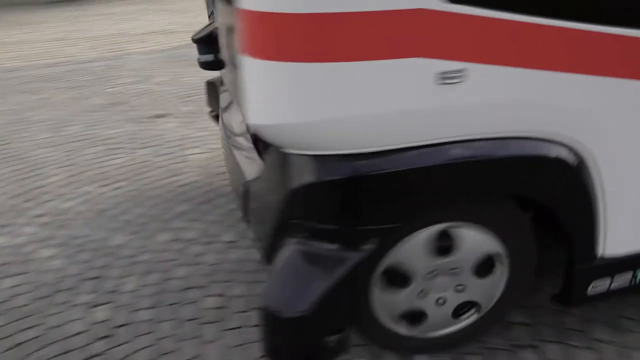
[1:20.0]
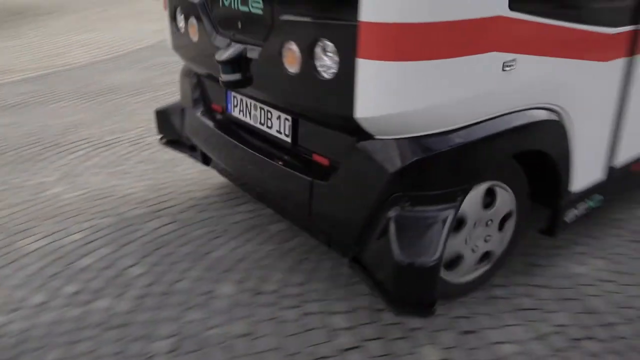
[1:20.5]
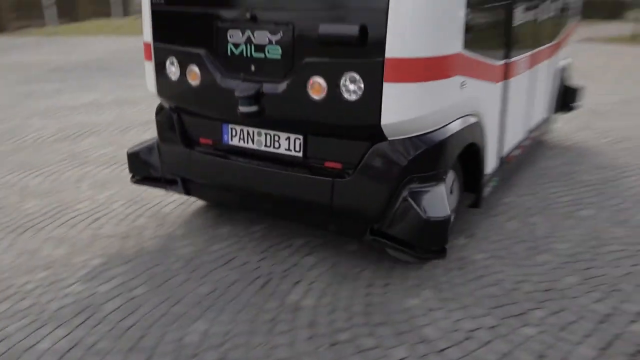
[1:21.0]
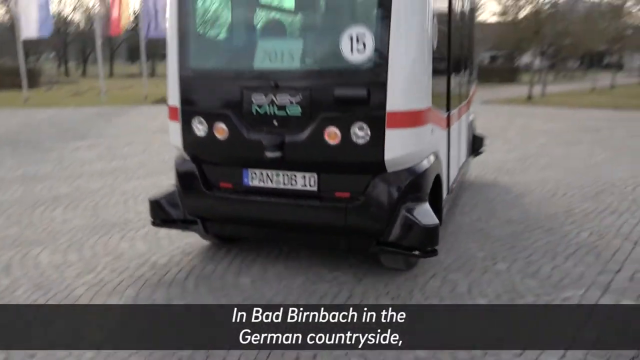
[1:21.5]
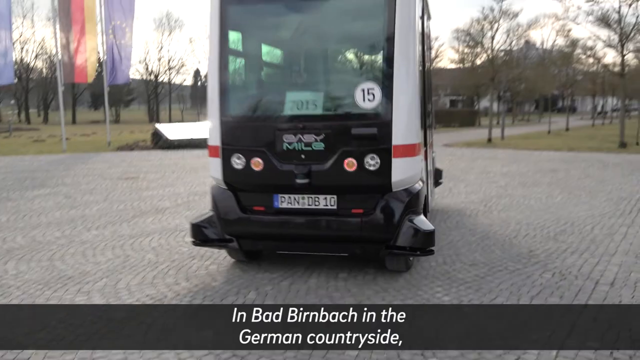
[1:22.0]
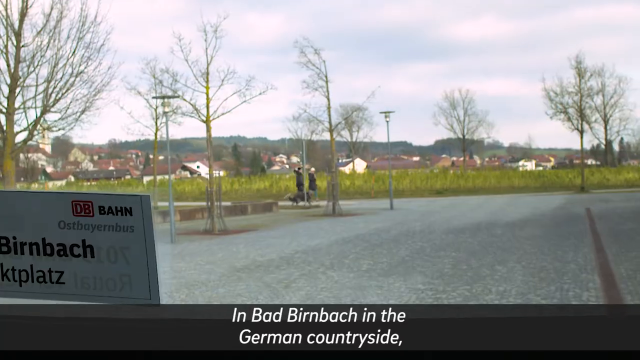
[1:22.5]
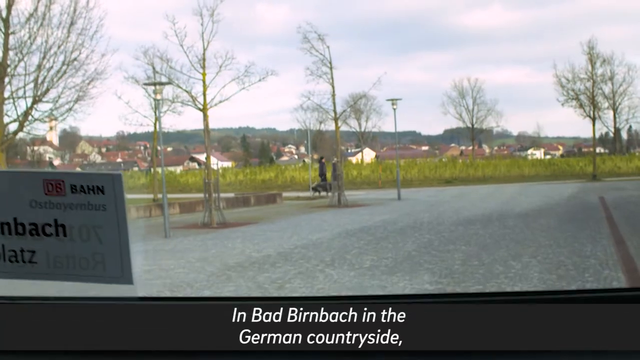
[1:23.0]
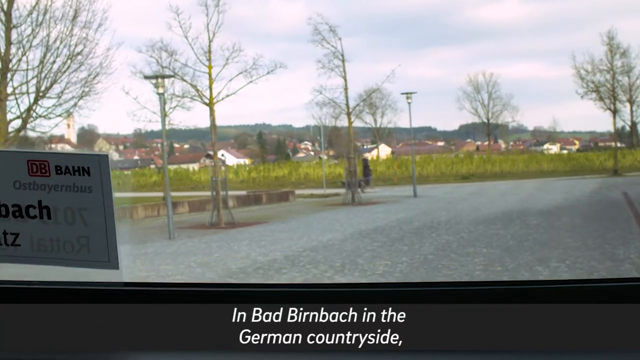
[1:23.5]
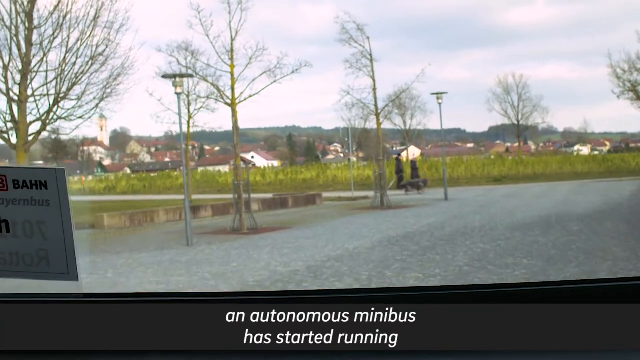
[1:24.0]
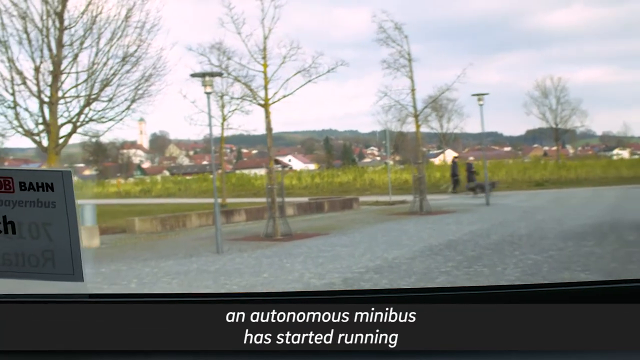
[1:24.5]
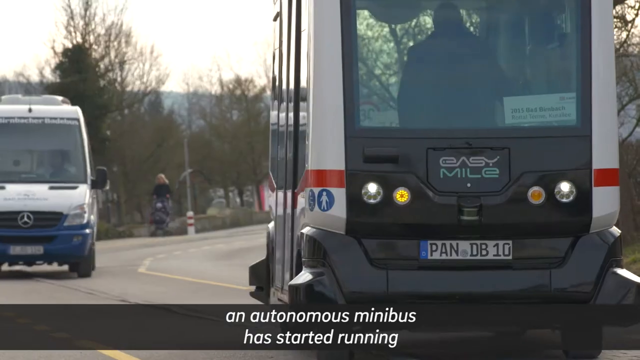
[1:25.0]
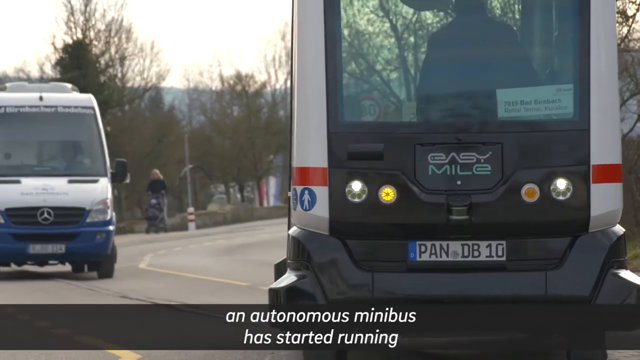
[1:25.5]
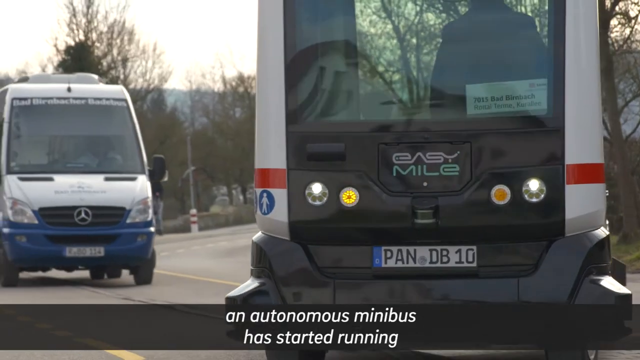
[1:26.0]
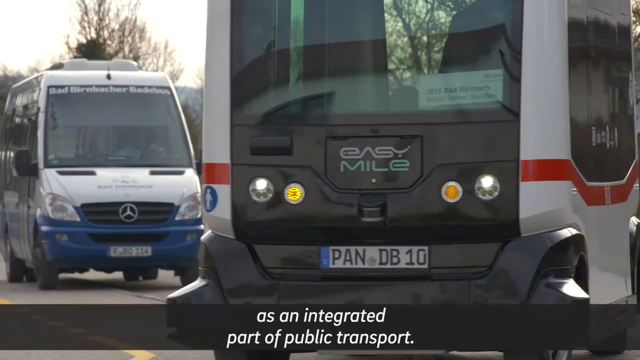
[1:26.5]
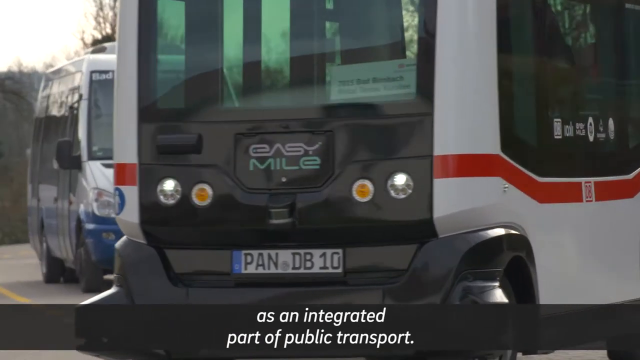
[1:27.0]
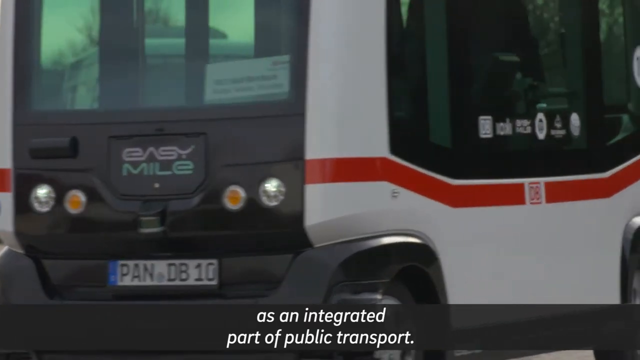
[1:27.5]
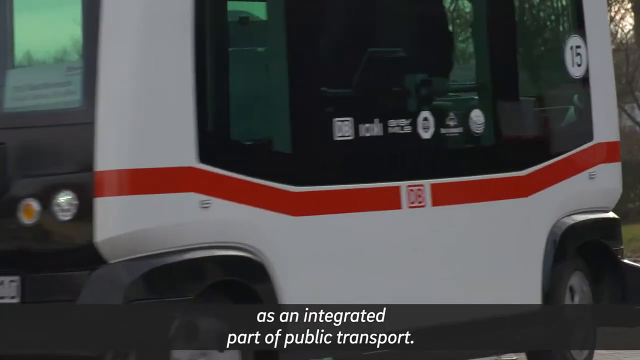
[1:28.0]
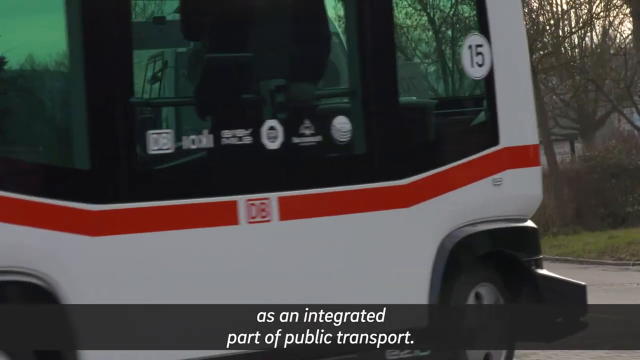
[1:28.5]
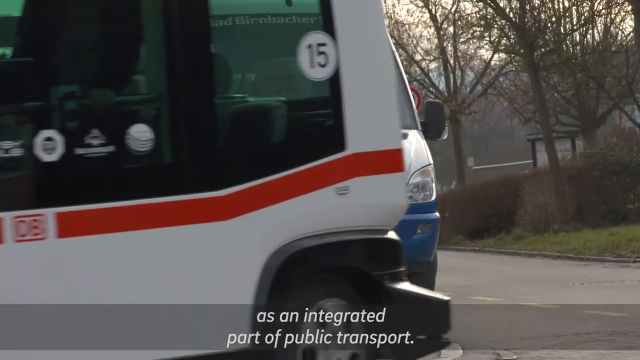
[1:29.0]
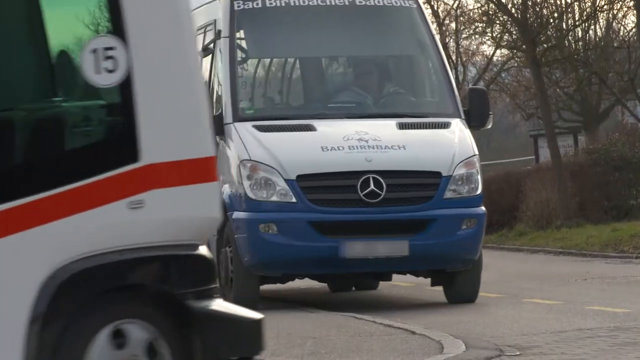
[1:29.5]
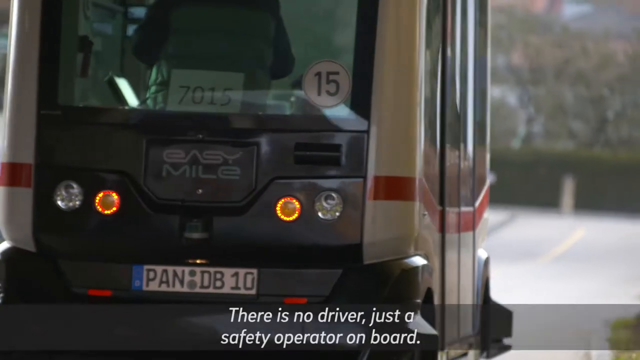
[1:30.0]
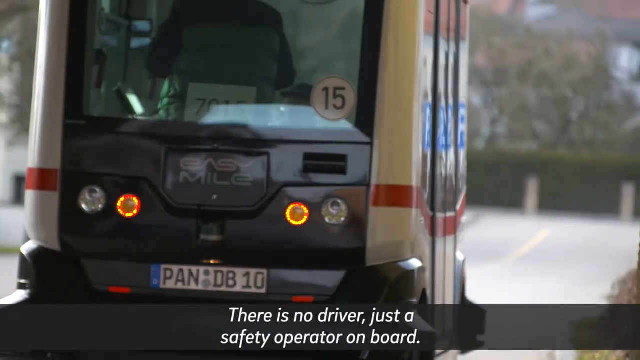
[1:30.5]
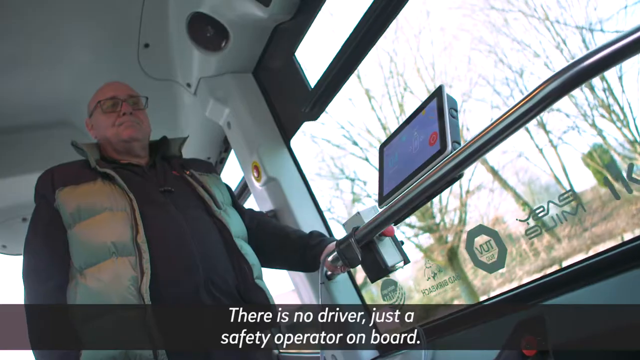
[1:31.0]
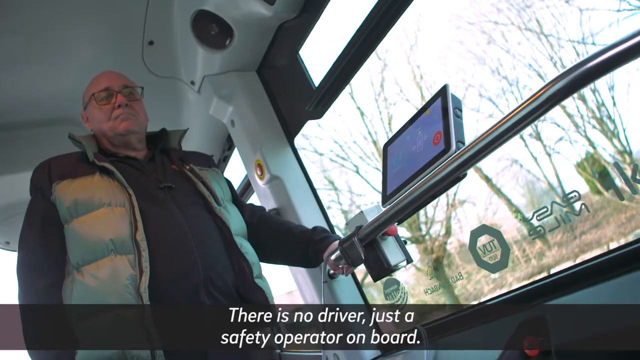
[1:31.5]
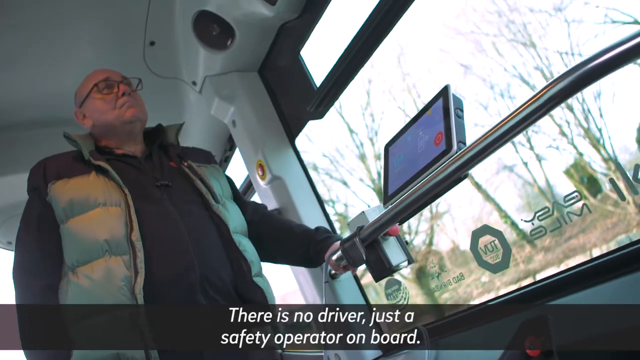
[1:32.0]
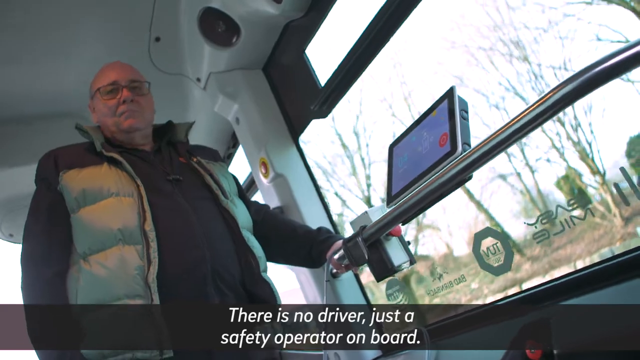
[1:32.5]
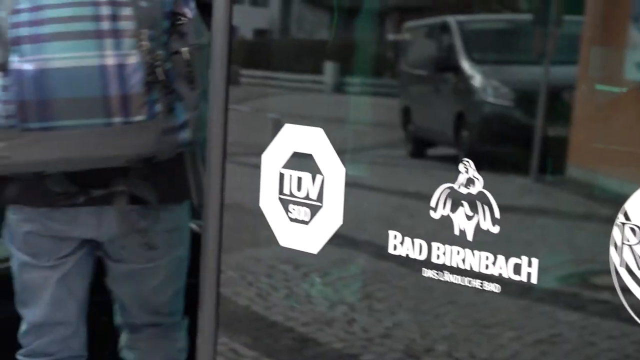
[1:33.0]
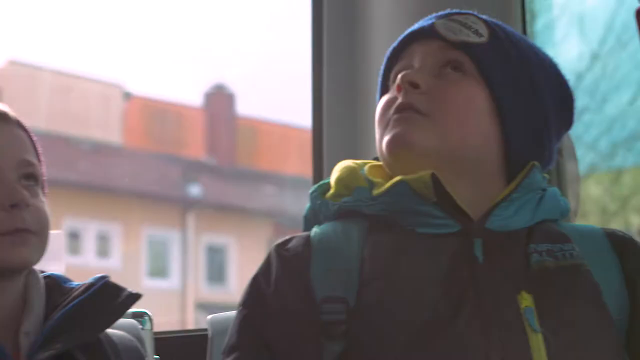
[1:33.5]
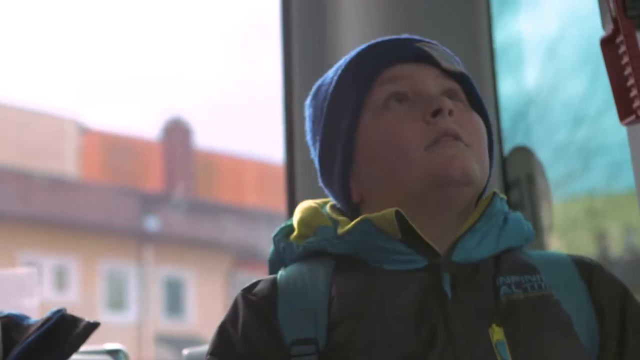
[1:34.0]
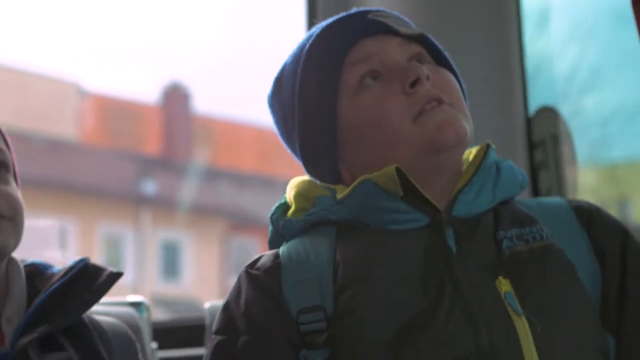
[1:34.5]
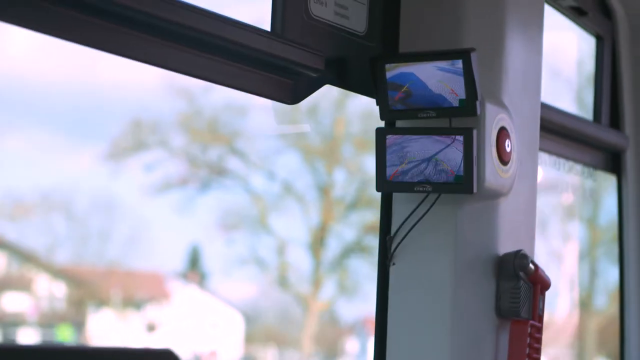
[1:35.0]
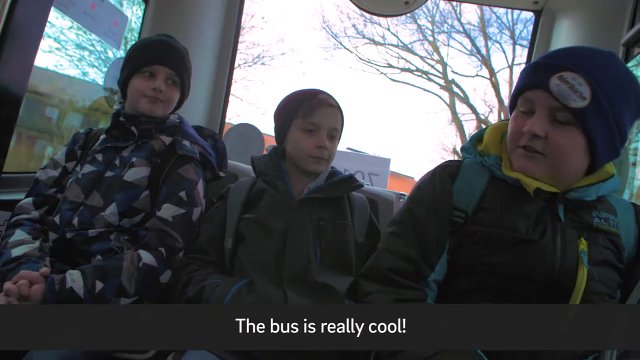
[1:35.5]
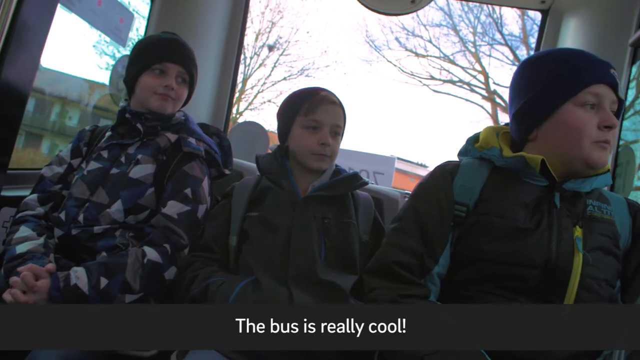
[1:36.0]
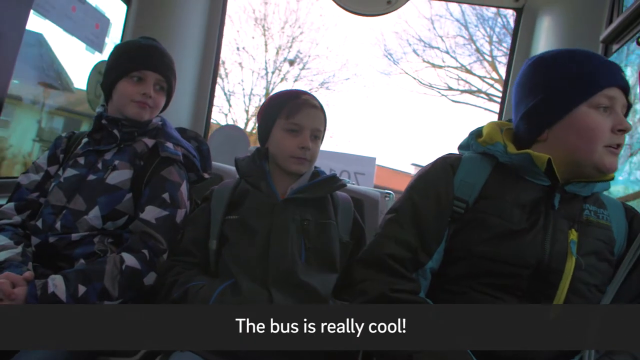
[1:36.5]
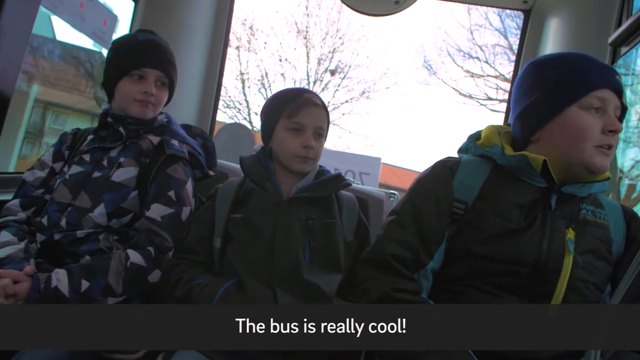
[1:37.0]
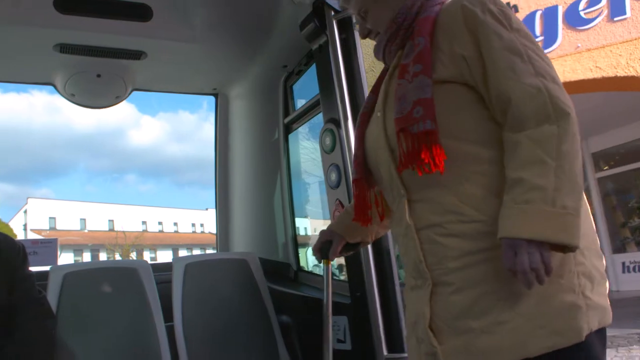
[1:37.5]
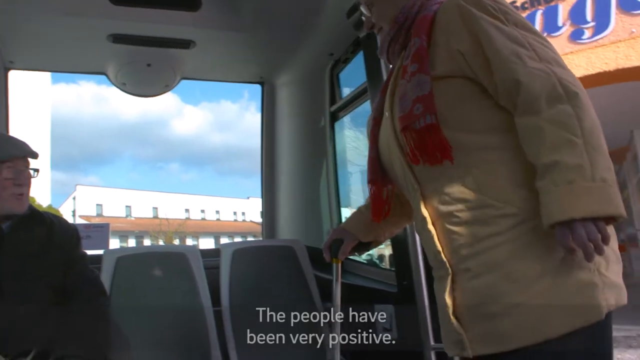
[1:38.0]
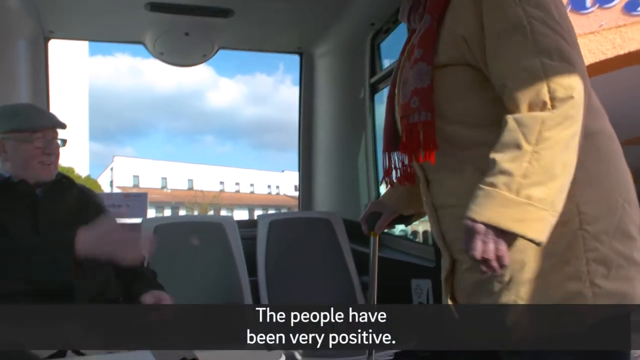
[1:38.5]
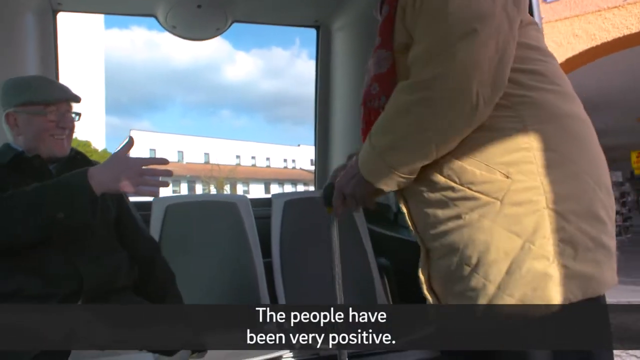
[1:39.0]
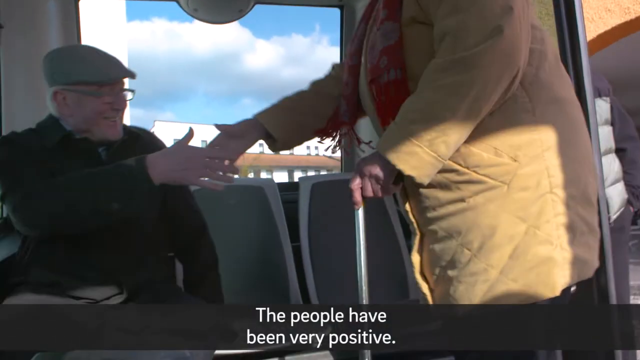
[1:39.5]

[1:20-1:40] The right side and back of a bus are shown; it is white with what looks like a red stripe. The back tire is big and black with what looks like a silver hub cap in the middle. The license plate reads "PAN" and, on the right, "DB" followed by some spaces and "10," in black. Above that, on the back of the bus, "easy" is written in white and "mile" in green. The bus drives along, and the number 15 appears in a circle, possibly the route number. Text mentions Birnbach in the German countryside and an autonomous minibus integrated as part of public transportation, with no driver and a safety apparatus on board. Text reads "the bus is really cool," attributed to the kids, followed by "the people have been very positive."